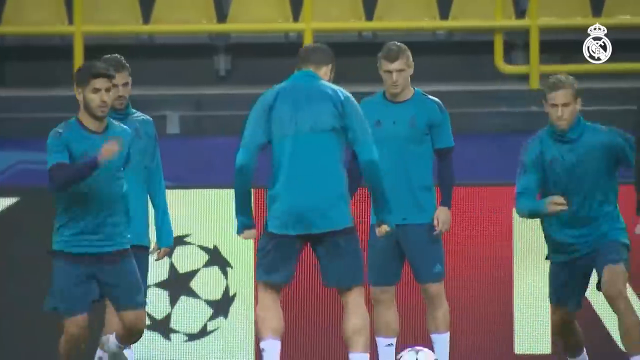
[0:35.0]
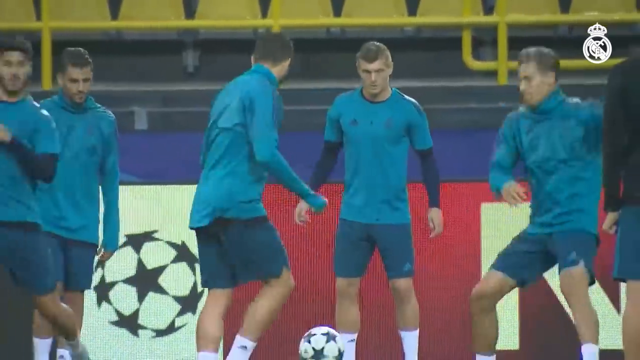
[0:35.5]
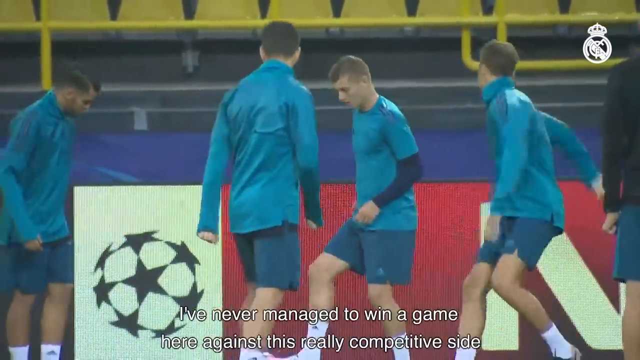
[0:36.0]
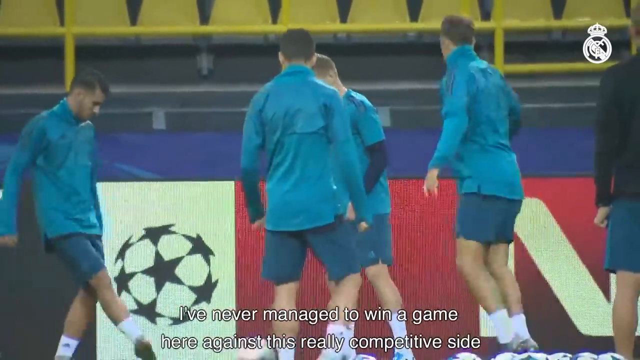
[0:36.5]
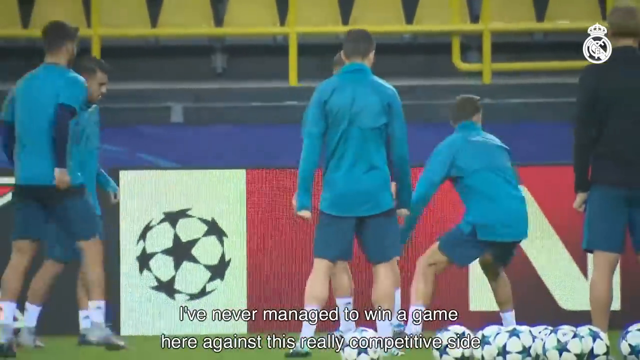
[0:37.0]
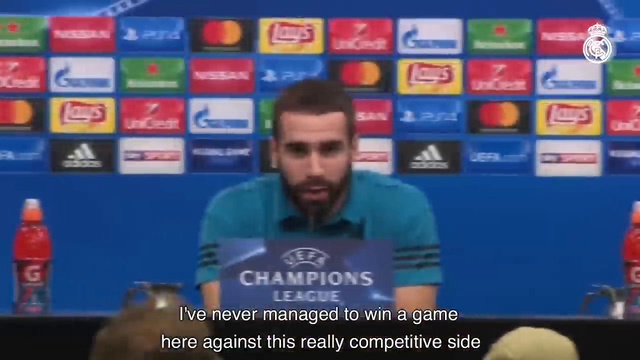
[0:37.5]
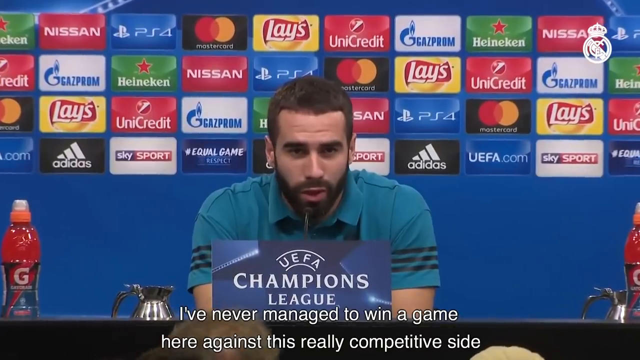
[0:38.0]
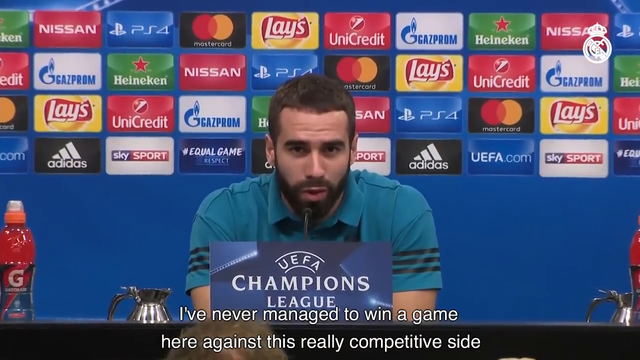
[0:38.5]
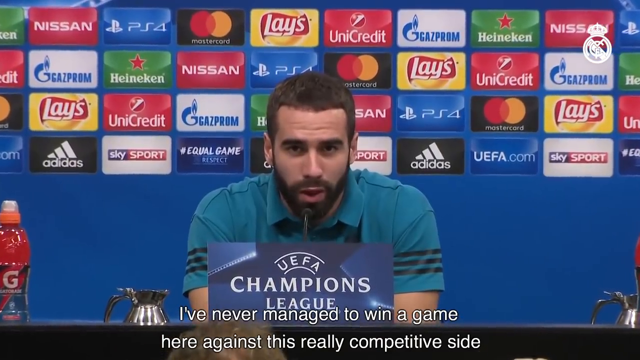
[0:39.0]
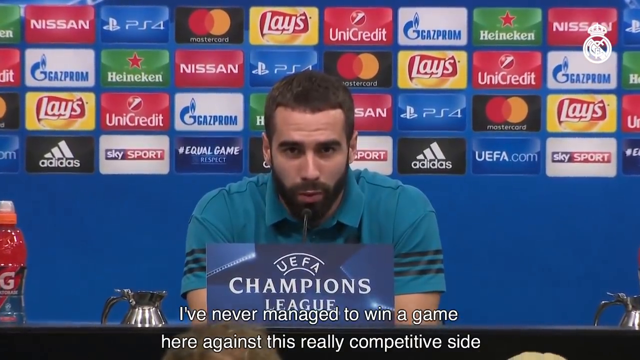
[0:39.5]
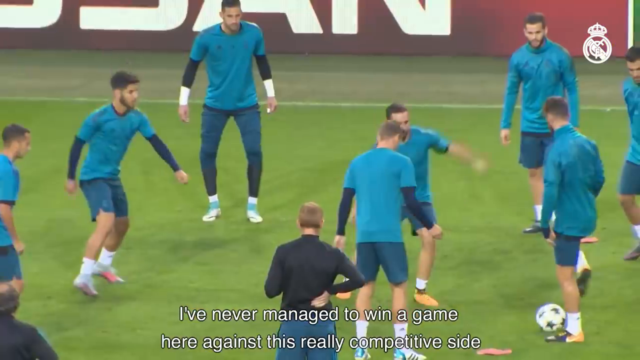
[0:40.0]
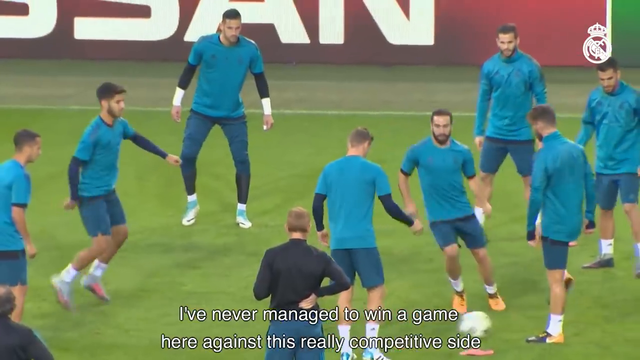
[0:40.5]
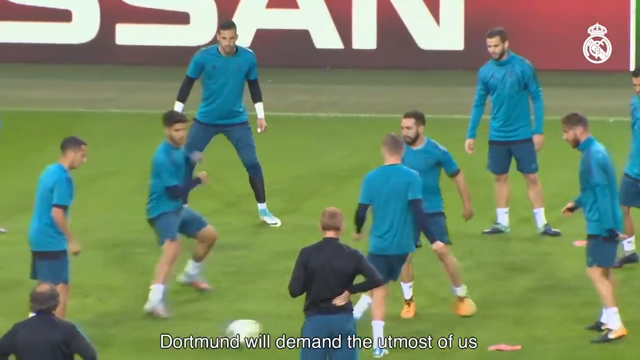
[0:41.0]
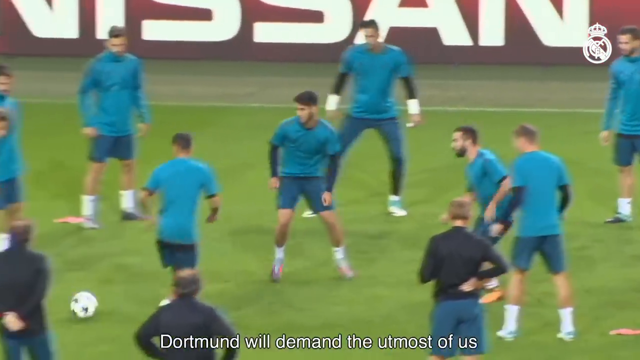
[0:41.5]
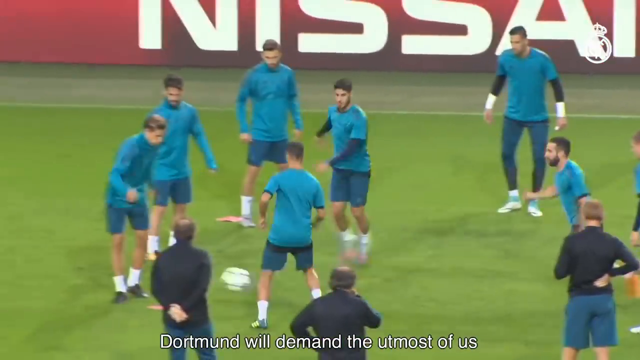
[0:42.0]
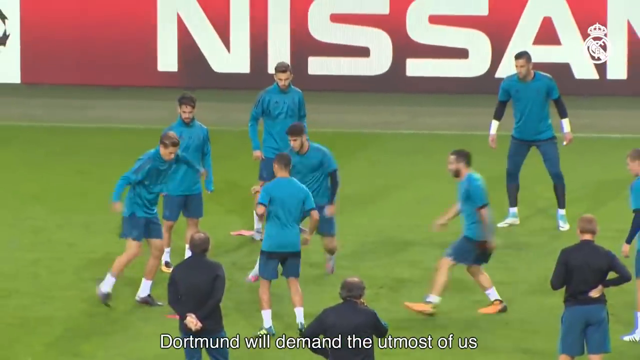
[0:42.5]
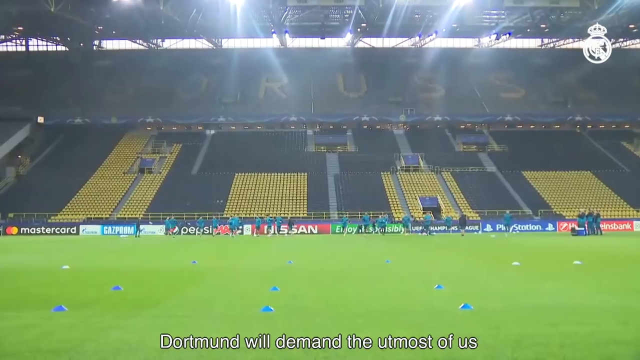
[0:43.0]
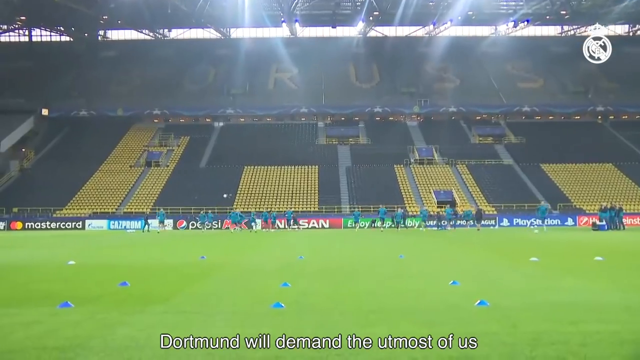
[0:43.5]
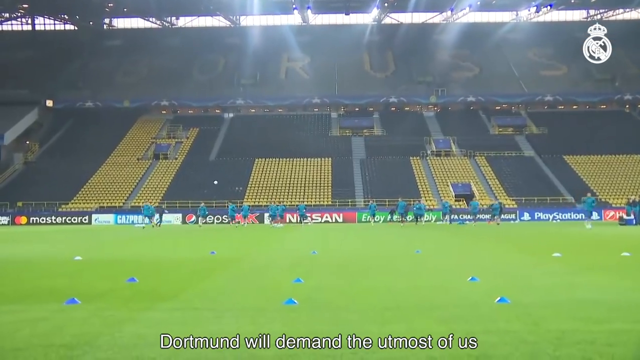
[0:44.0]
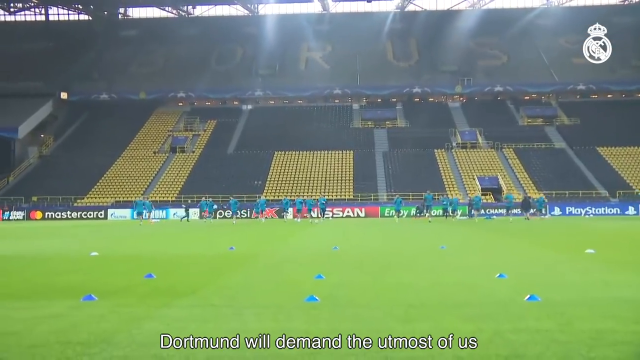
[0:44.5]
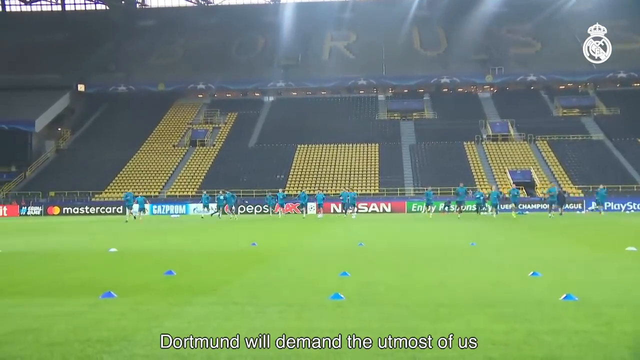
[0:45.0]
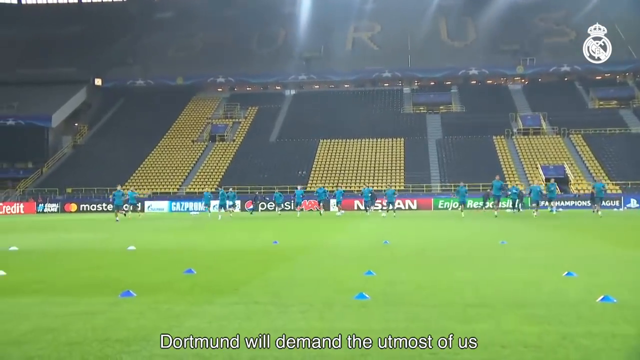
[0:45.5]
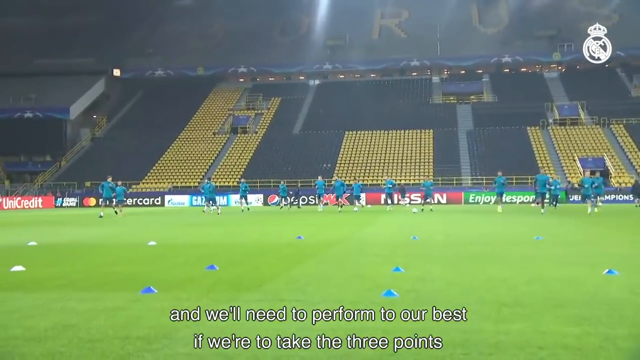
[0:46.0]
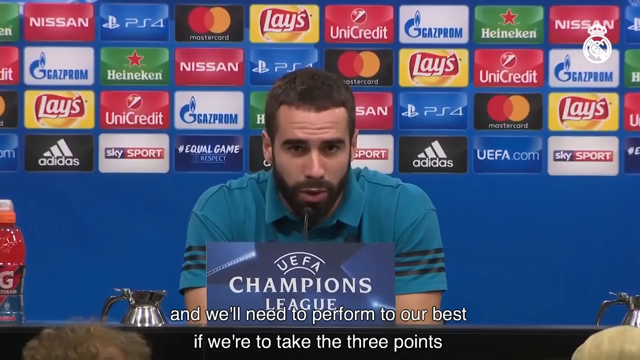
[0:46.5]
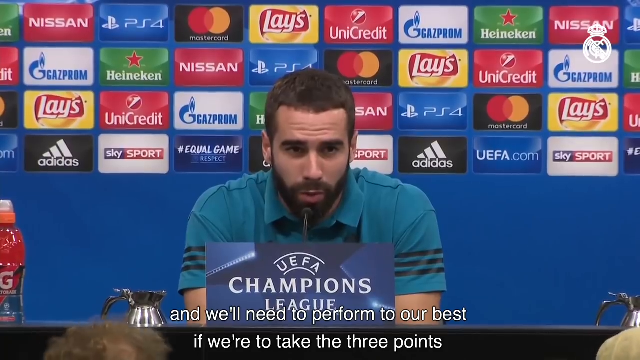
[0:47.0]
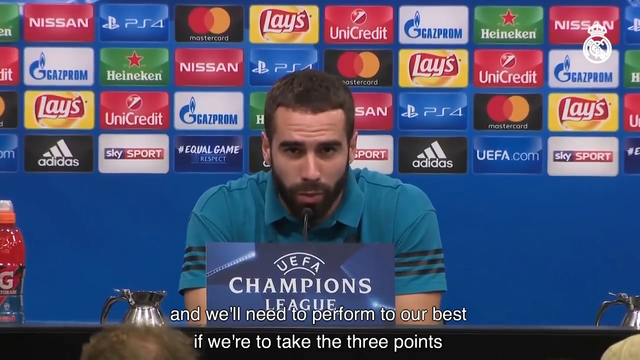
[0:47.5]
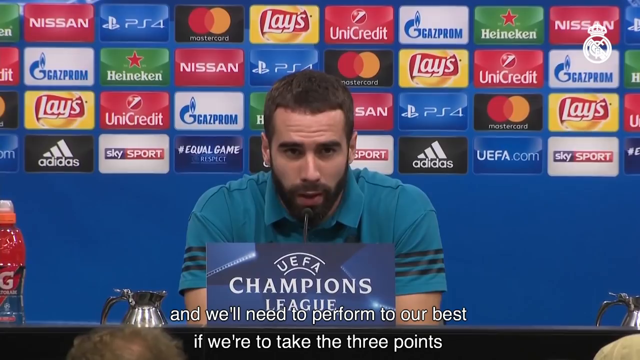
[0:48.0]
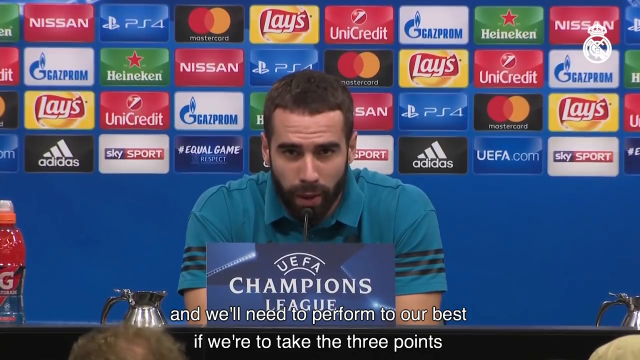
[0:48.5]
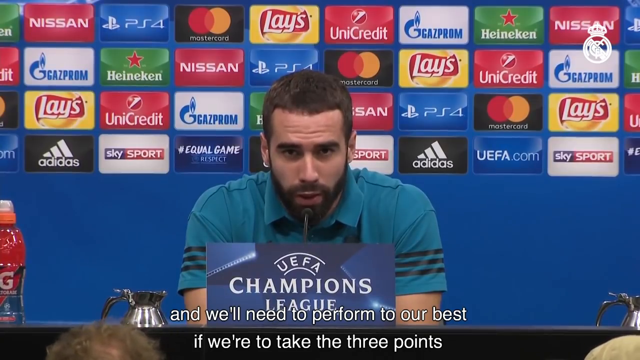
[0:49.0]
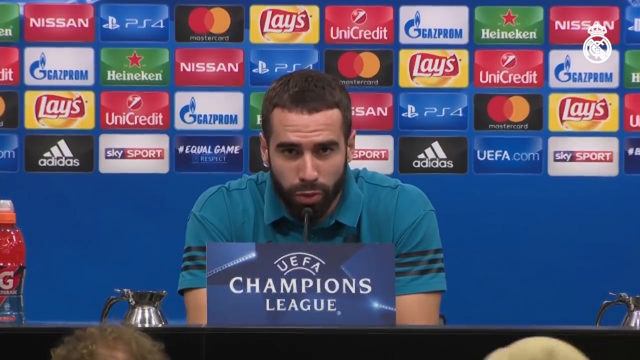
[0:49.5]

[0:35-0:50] Football players play in the stadium. It appears to be practice, as they are just kicking the ball amongst themselves and doing drills. The scene transitions back to the press conference, where a different man is now speaking. There is no label or graphic giving his name, but he is presumably a player. The scene returns to the stadium as the players continue to perform drills and kick the ball around. Various advertisements run along the stands, including ones for MasterCard, Gazprom, Pepsi, the Playstation 4 and Nissan.